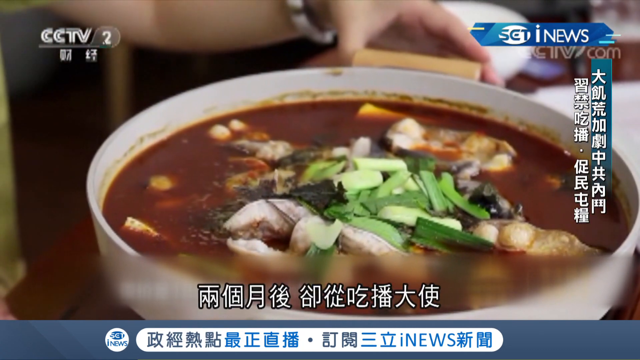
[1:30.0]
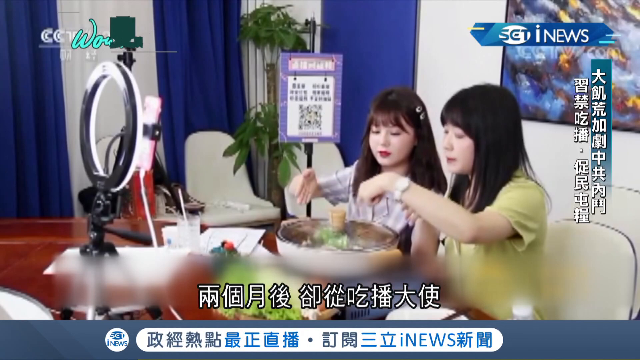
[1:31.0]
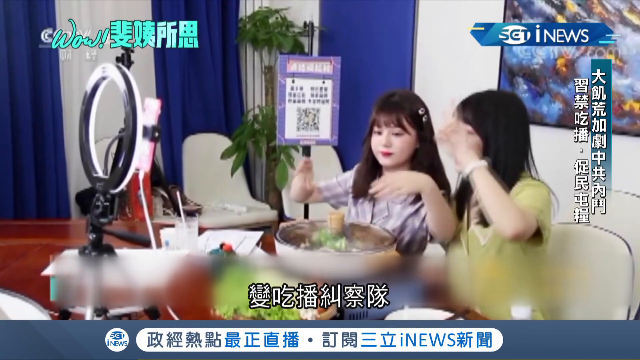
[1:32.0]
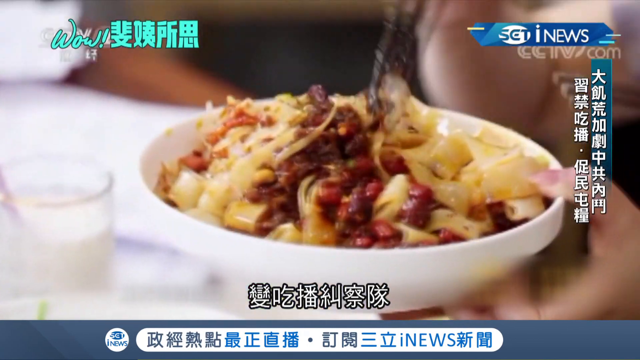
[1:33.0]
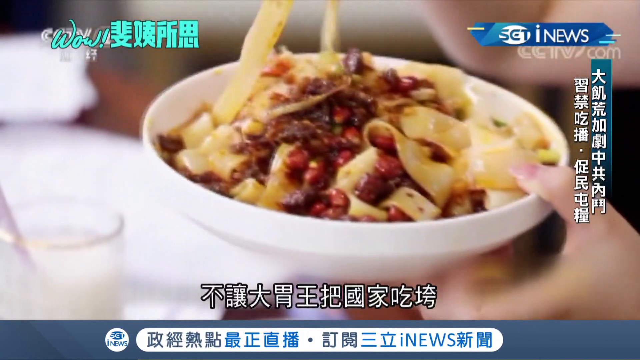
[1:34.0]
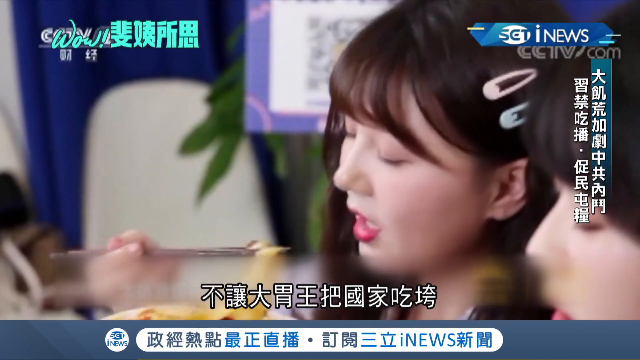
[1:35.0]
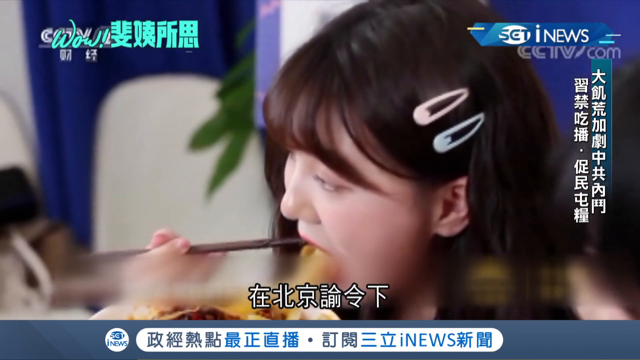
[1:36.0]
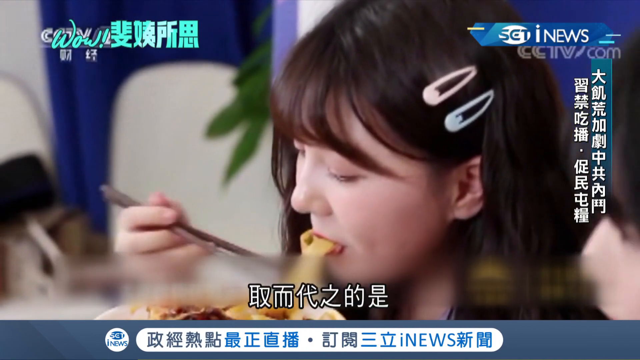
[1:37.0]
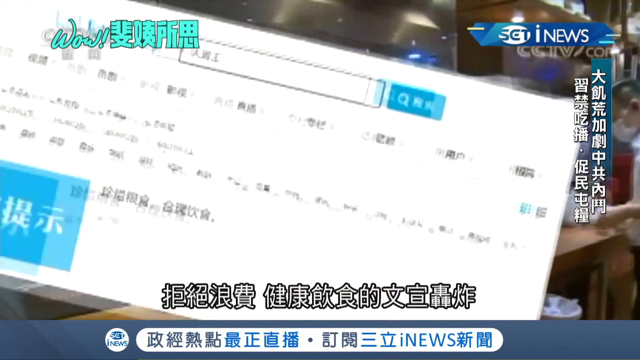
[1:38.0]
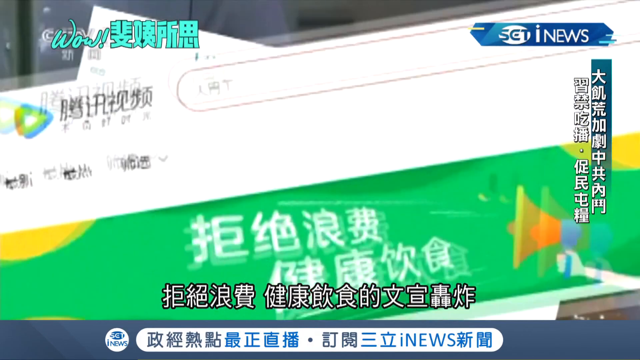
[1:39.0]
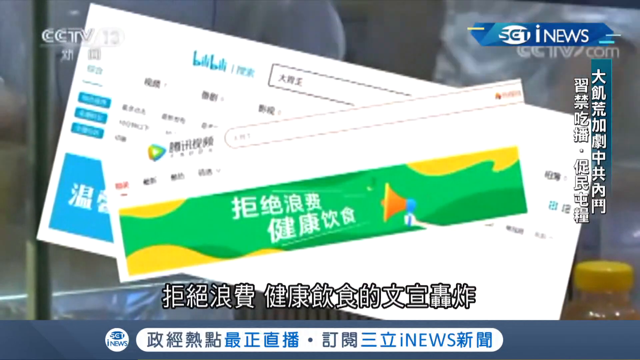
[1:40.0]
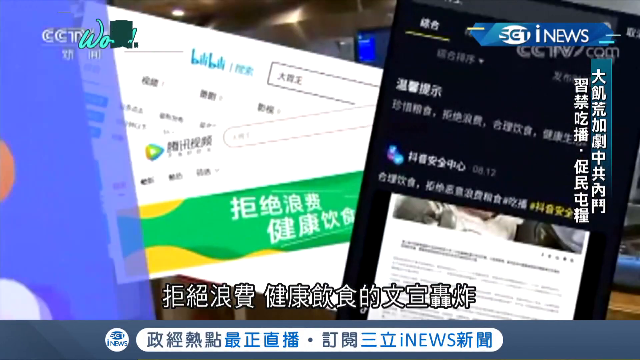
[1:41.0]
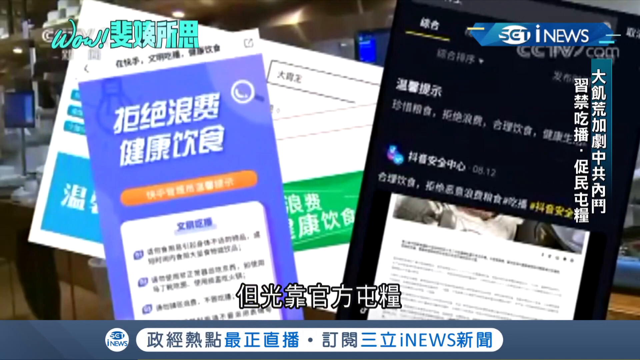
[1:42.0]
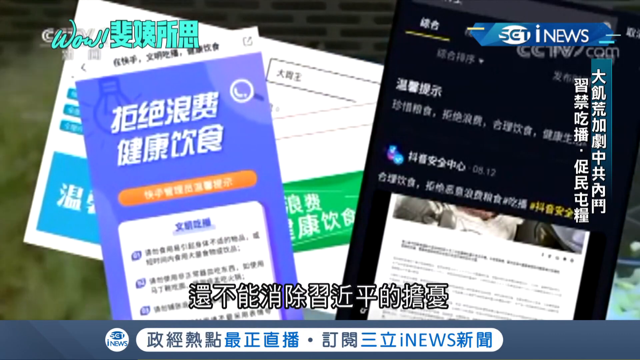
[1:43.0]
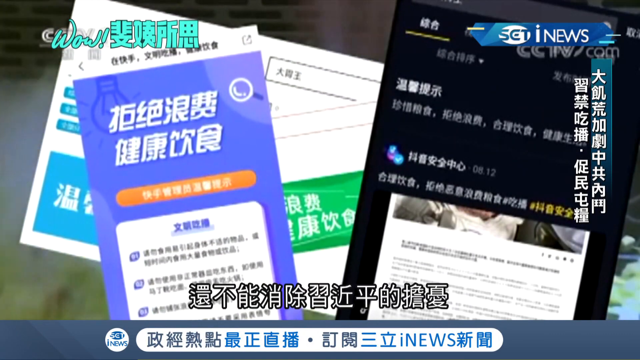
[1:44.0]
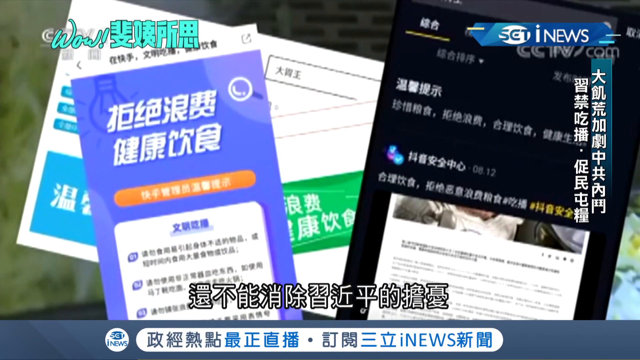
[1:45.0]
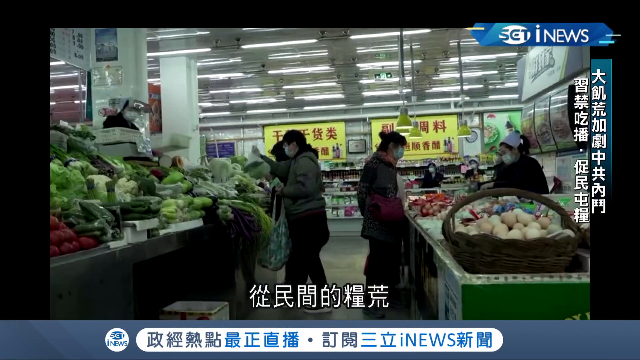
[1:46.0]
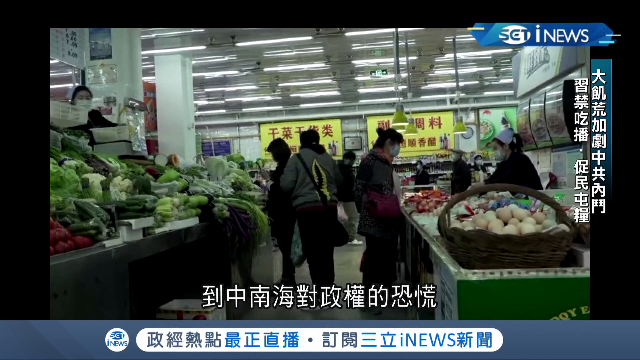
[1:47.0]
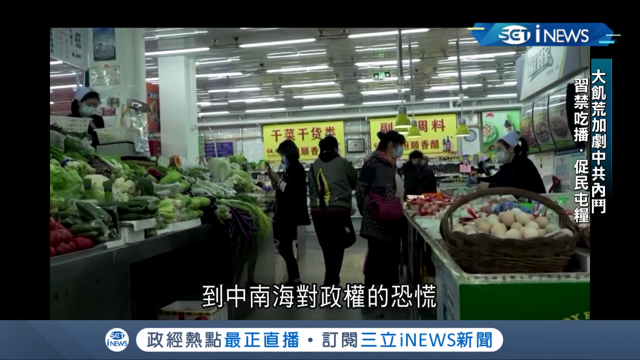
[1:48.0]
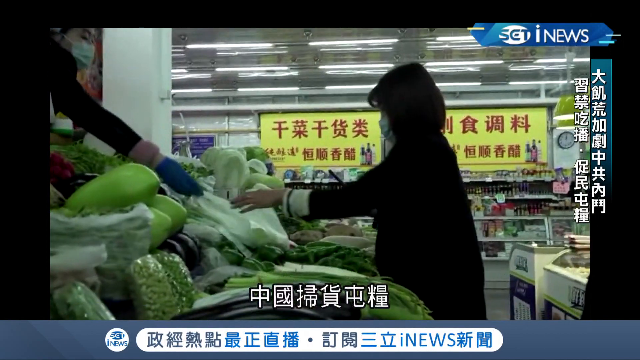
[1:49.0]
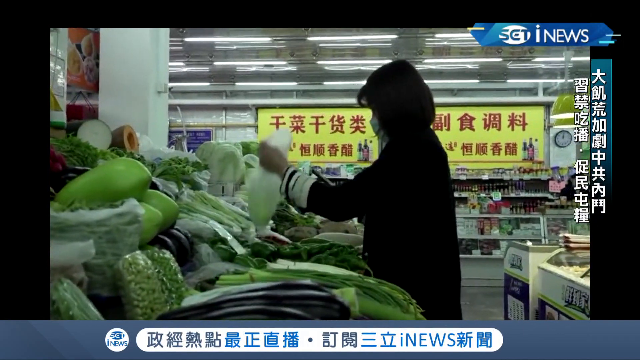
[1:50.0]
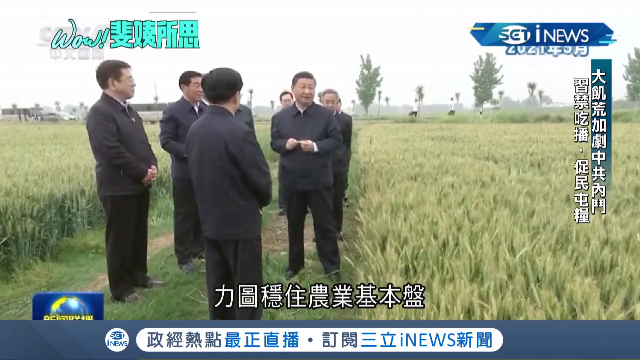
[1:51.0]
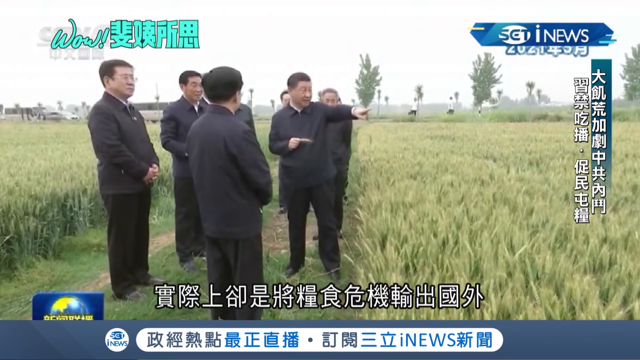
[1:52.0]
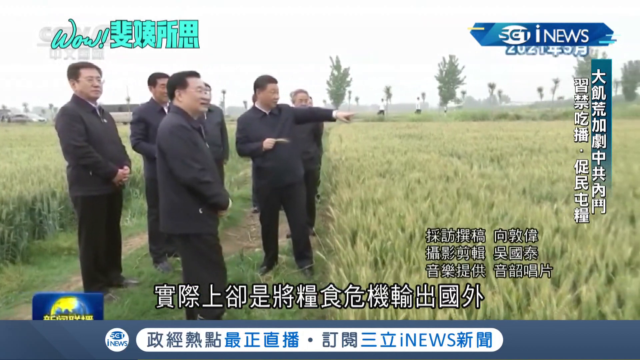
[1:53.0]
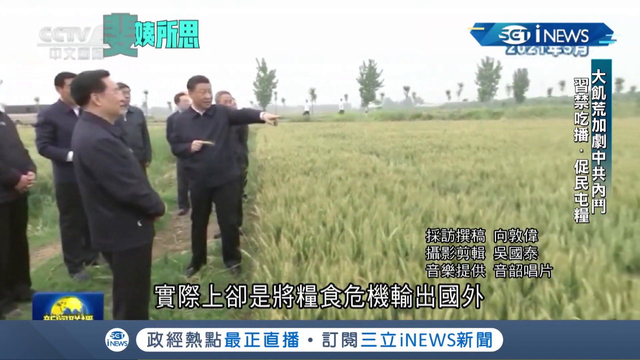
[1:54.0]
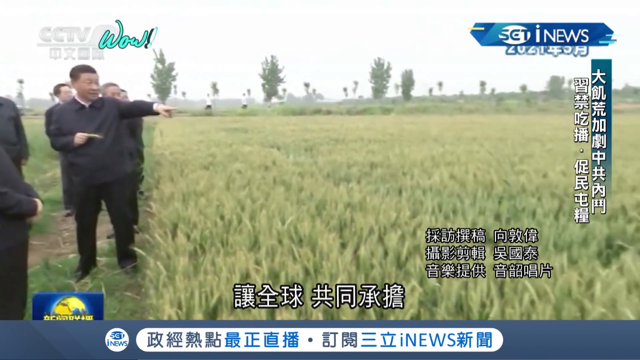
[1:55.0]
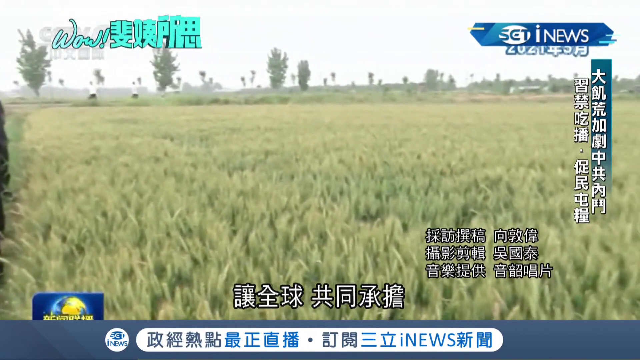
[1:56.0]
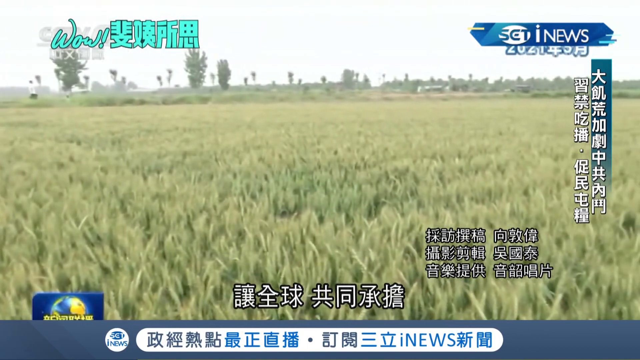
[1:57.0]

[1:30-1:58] The women record themselves using a circle light with cell phones or cameras attached to it. They appear to be influencers doing food challenges, apparently recording themselves eating and posting it online. Some webpages appear, and then people shop in the produce section of a grocery store, where a customer picks out produce. Chinese President Xi stands outside on a crop field, with a crop field to the right and a crop field to the left, and several other men stand around him. Xi is talking, and all of the men, including him, are dressed in black. In the distance there appear to be large white buildings and tall green trees. Xi points to the right side, and the camera shifts to the right to reveal a very big farm area.